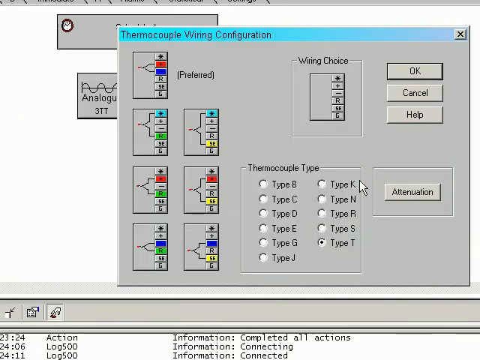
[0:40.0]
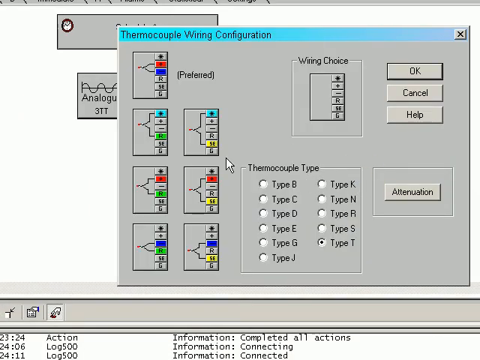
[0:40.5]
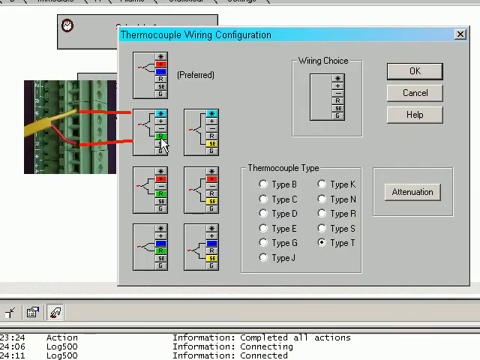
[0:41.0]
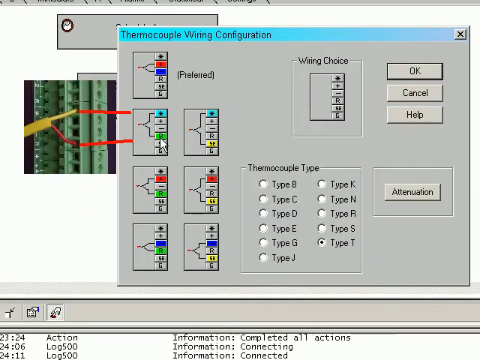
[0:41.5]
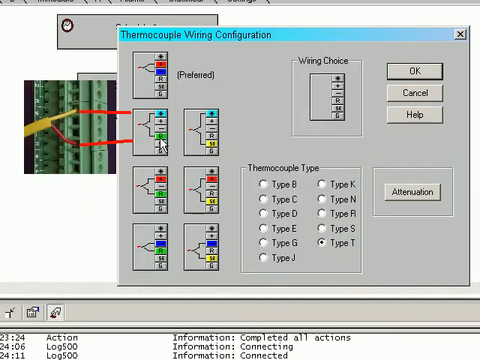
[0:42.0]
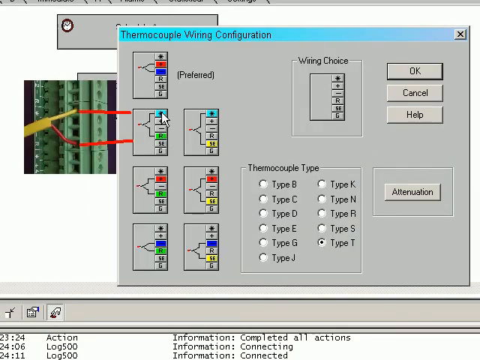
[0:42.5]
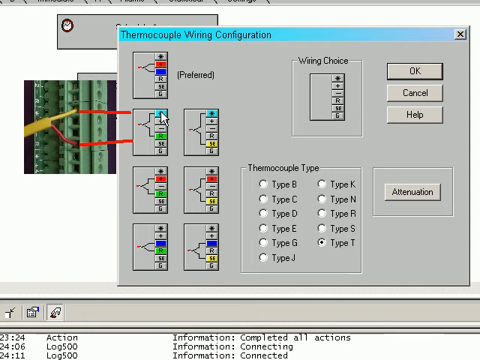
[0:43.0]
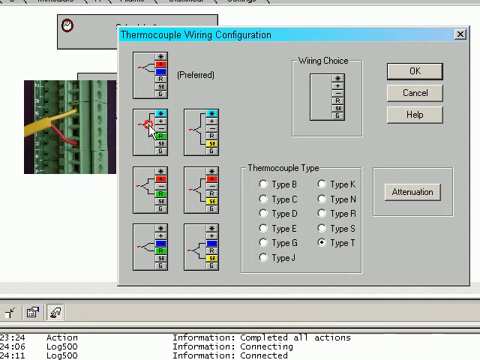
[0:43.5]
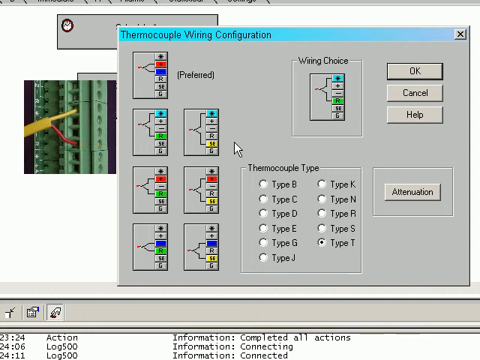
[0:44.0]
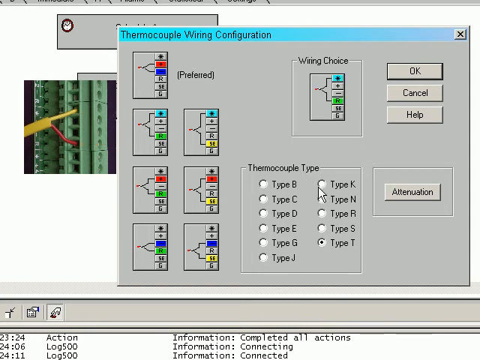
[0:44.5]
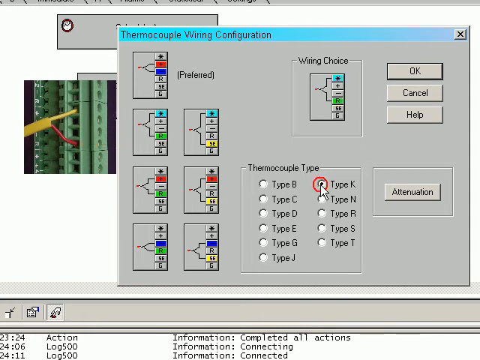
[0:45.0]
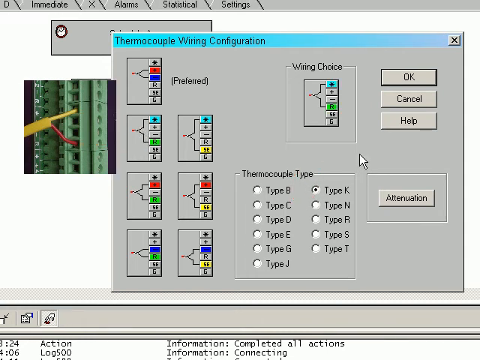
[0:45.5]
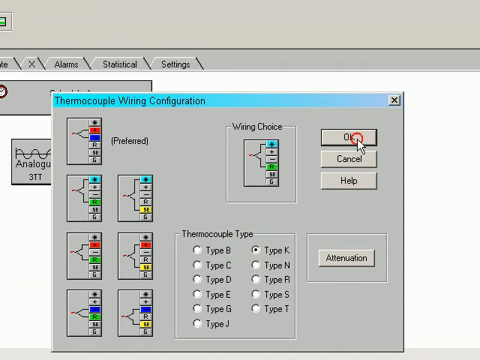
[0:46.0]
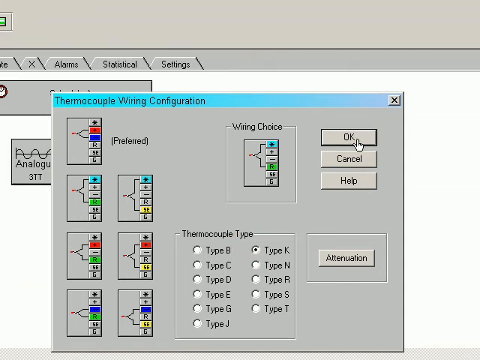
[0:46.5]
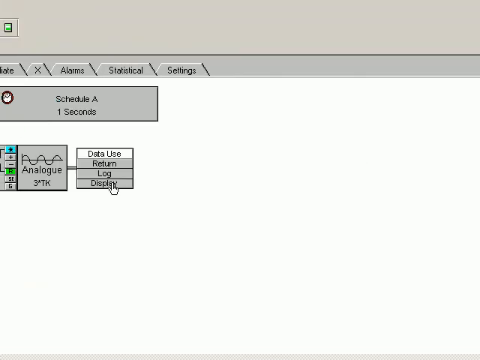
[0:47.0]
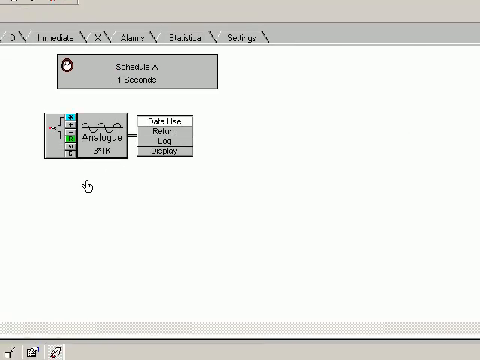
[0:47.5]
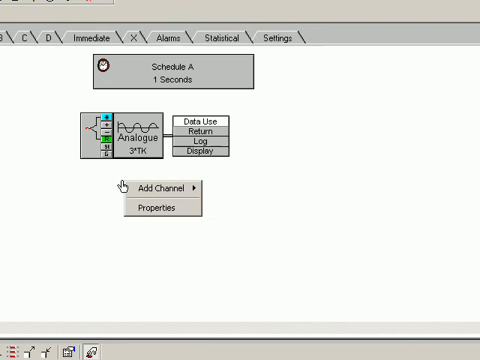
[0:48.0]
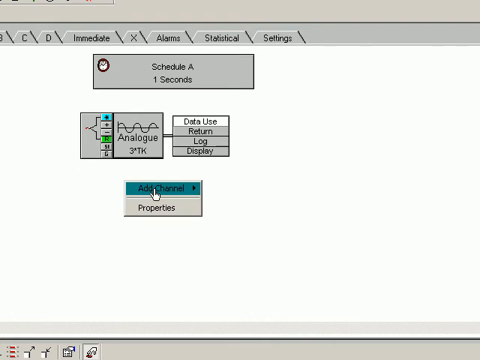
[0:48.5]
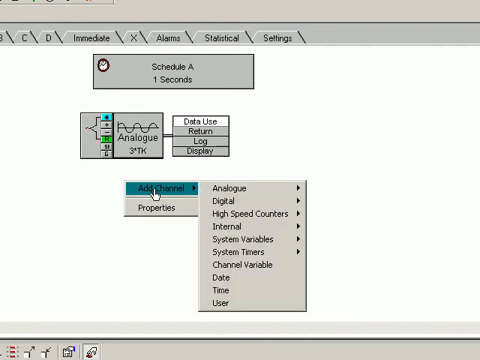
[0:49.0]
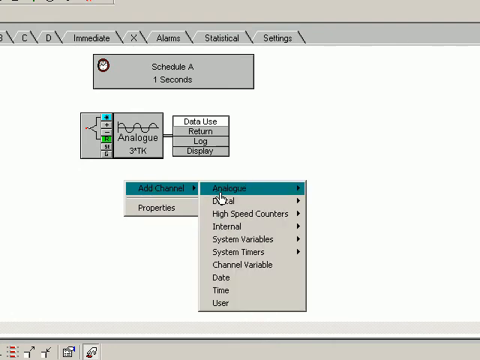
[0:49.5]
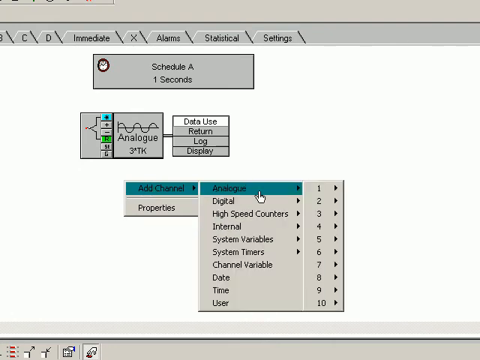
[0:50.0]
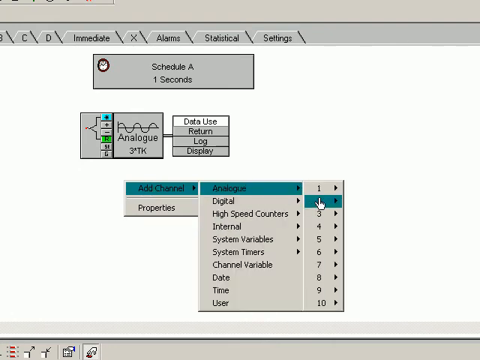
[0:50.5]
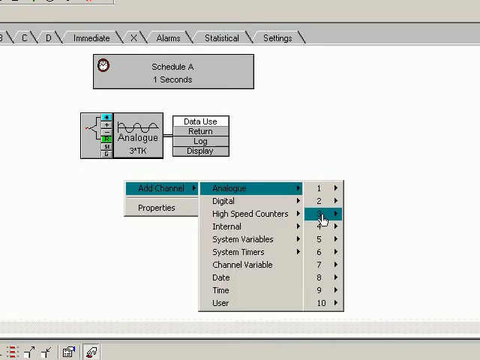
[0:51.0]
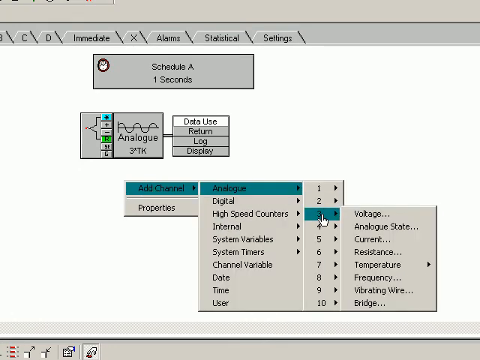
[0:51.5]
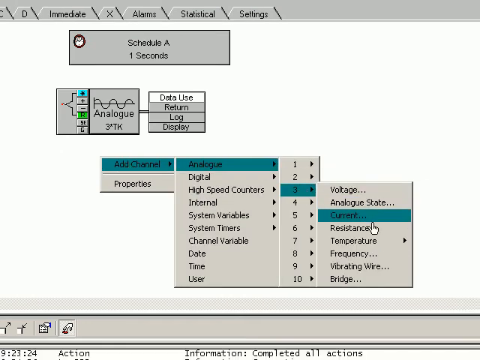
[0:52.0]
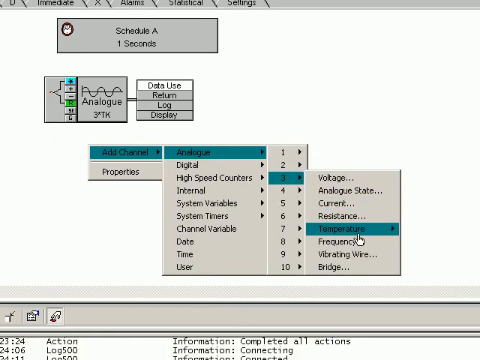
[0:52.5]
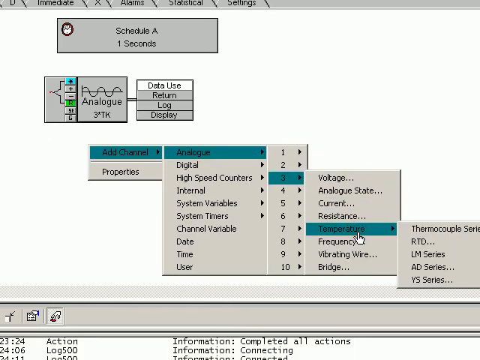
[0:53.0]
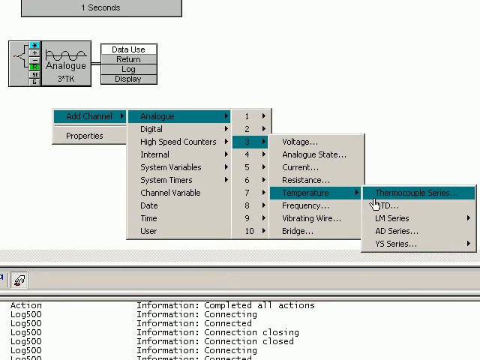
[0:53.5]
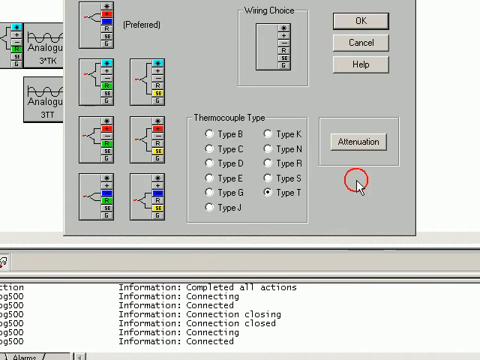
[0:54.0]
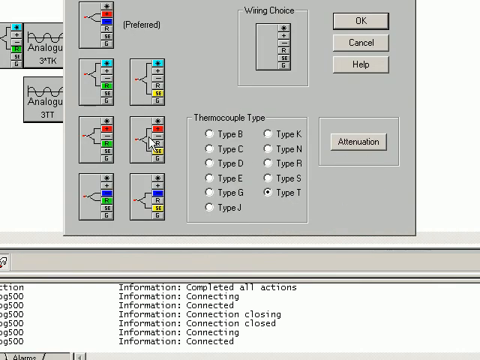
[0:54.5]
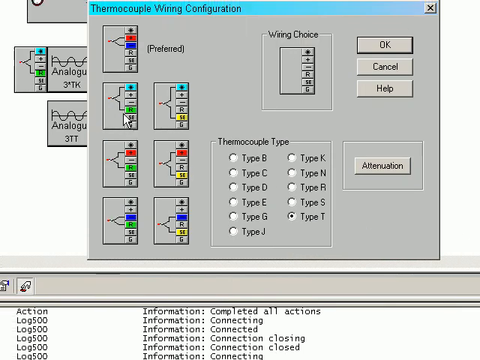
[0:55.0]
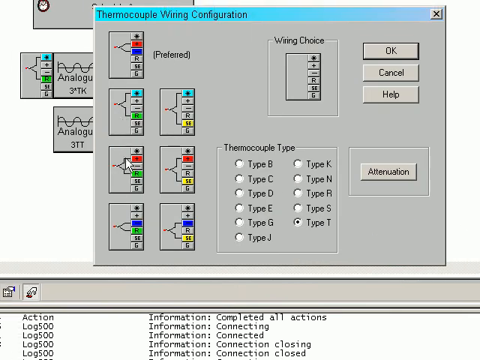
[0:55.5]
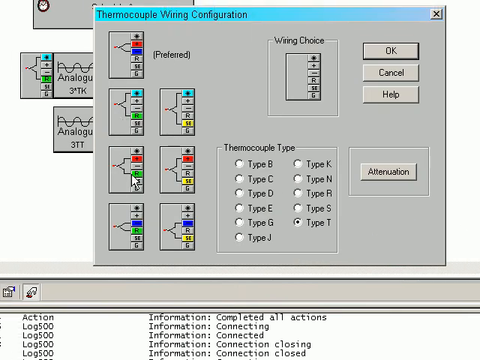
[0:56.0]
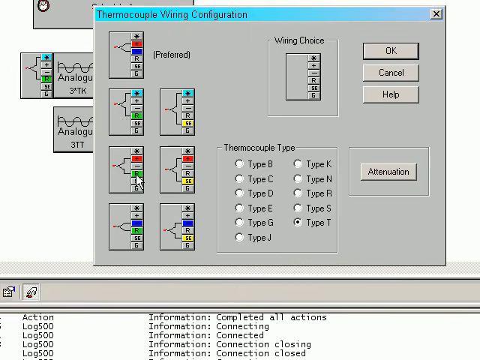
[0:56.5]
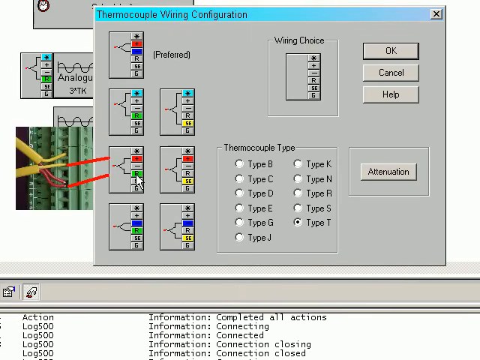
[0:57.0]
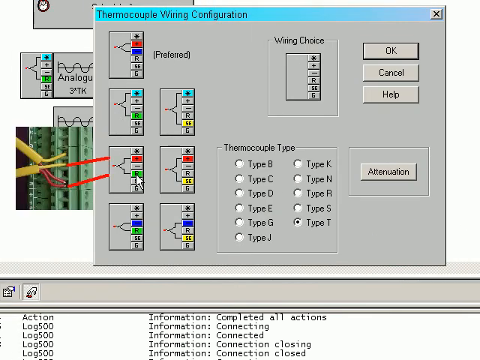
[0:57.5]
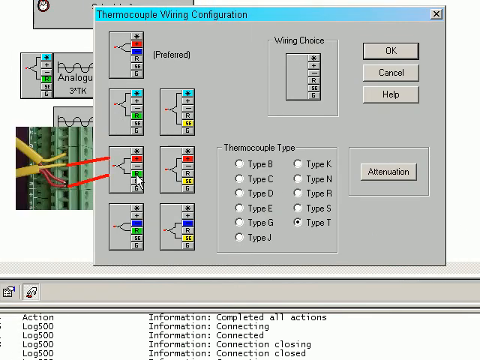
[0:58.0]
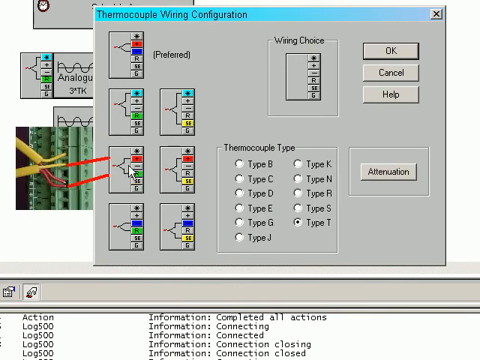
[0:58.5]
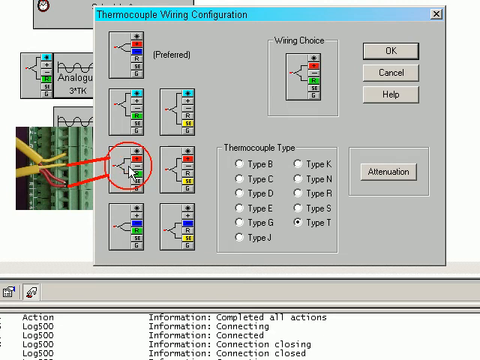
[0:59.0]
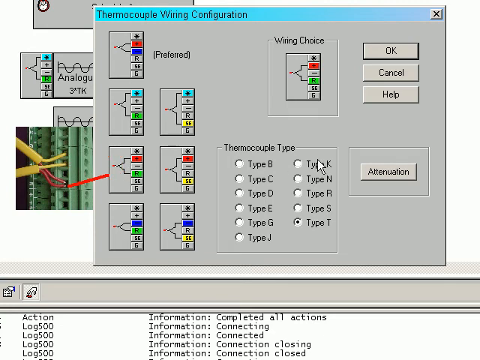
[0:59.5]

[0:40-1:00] Once thermocouple series is selected, a new pop-up appears. On its left side are different schematics, apparently thermocouple diagram patterns, seven in total; the top one has text that says "preferred". On the left side there is also another large image of the thermocouple wiring. The second option in the second row is clicked, then type K is clicked under thermocouple type; as the mouse clicks, a red circle appears around it. OK is clicked and the pop-up closes, revealing an image of the wiring schematic connected to another box that says "data use return log display". Another channel is added, again analog number three and temperature, and another thermocouple series pop-up opens. This time the third row is clicked, an image of the wires appears, and type K is clicked again.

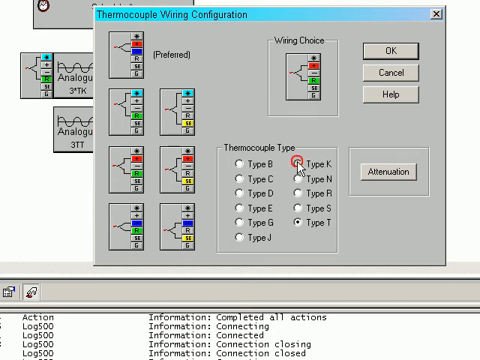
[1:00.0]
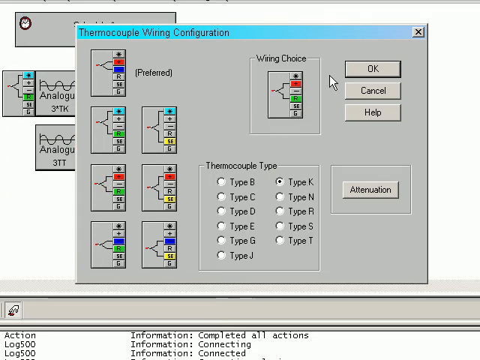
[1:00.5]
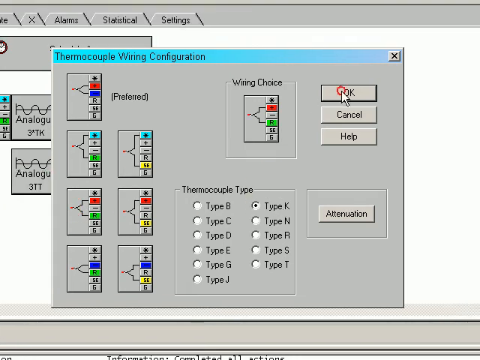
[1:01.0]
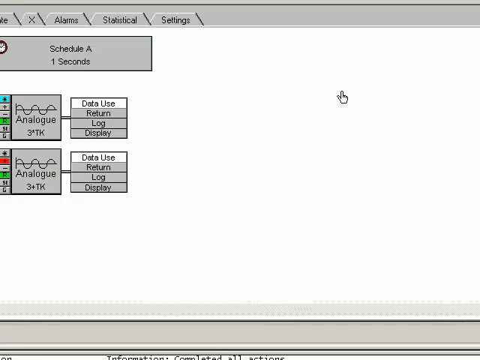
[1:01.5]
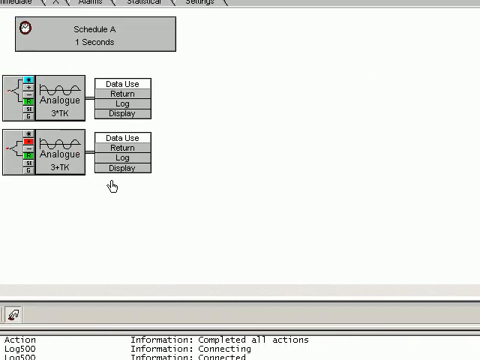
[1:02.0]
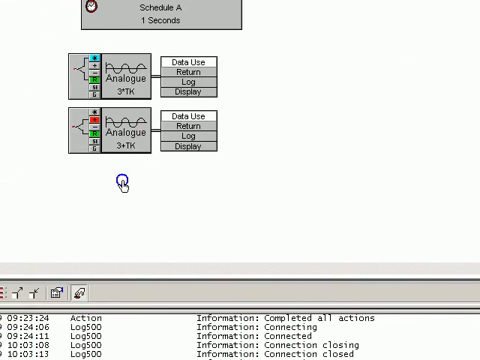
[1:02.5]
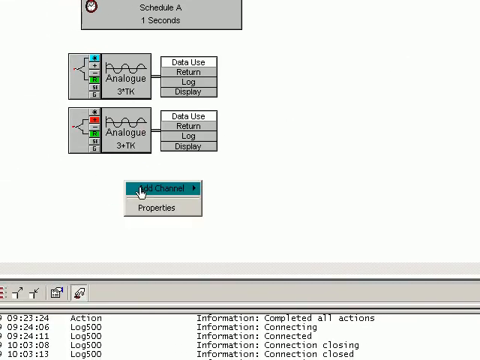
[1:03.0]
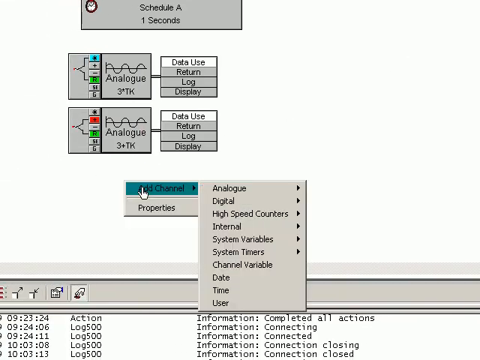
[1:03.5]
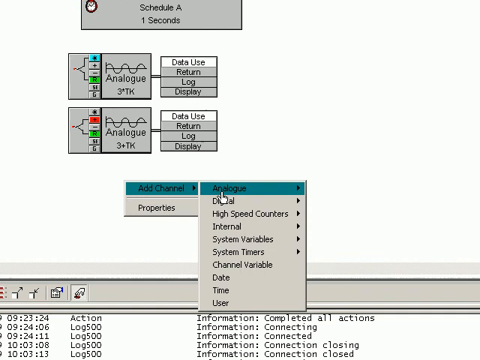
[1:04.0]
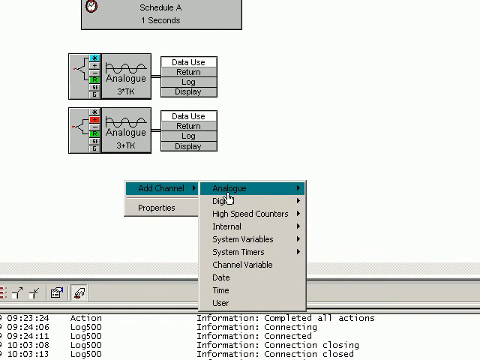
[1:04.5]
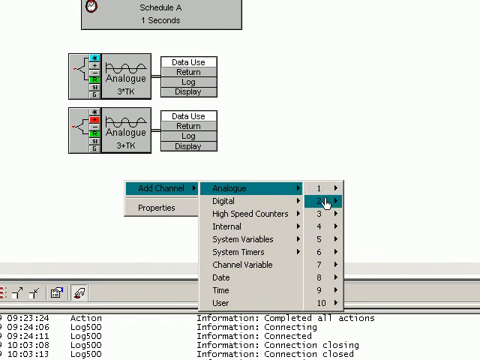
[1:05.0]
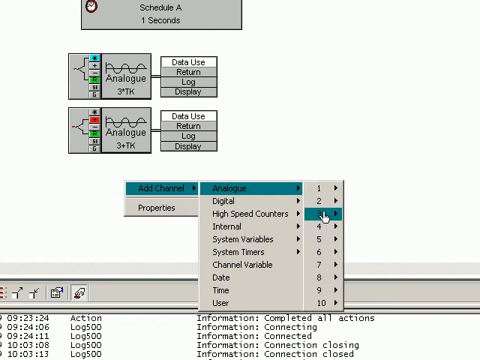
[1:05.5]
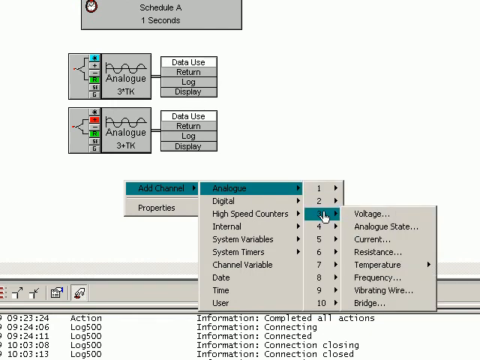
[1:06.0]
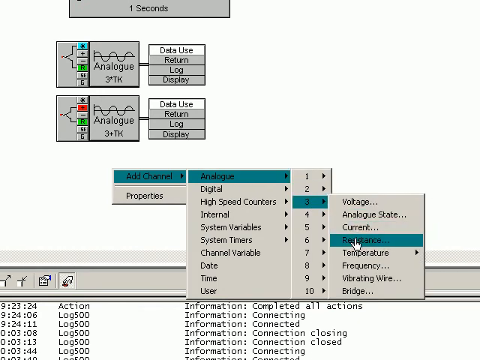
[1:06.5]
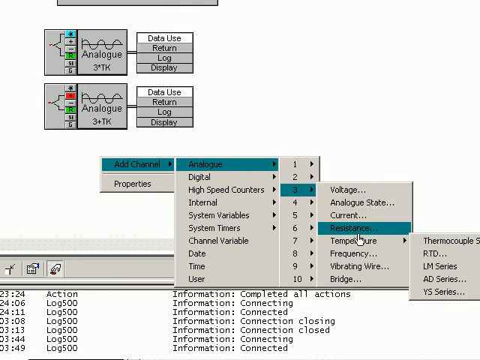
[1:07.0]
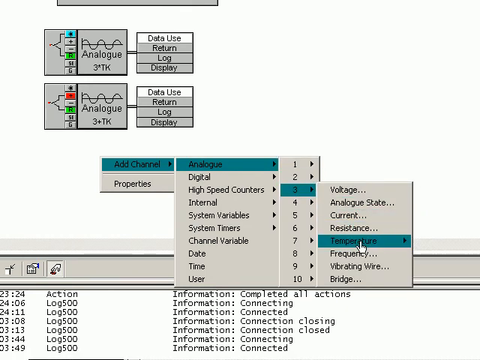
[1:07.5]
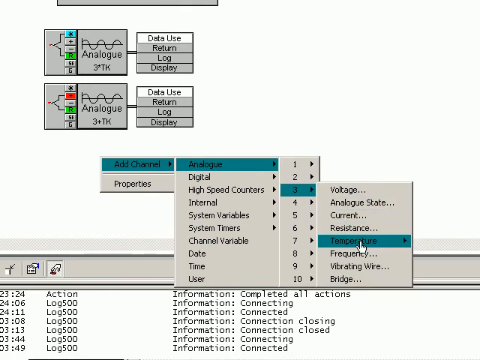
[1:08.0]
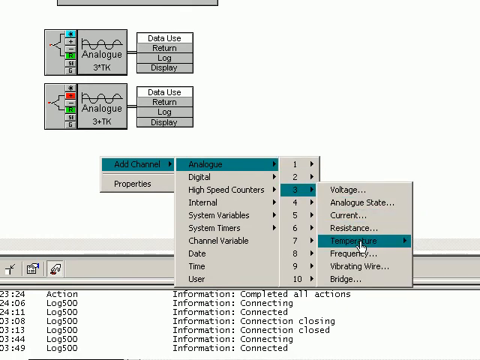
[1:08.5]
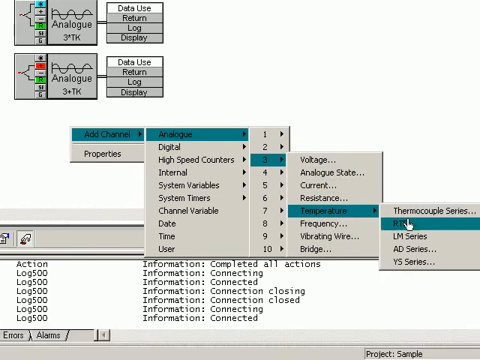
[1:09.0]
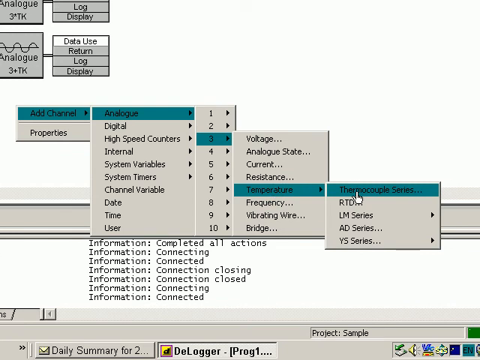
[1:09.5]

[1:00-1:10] The OK button is clicked, and the schematic appears on the white page, again connected to the table that says "data use return log display". A right-click adds another channel, going through analog three, temperature and thermocouple series again. Below the white page there is sort of a log of the actions: a white table showing the time on the left, the kind of action in the center, such as "action" or "log 500", and details about the information on the right.